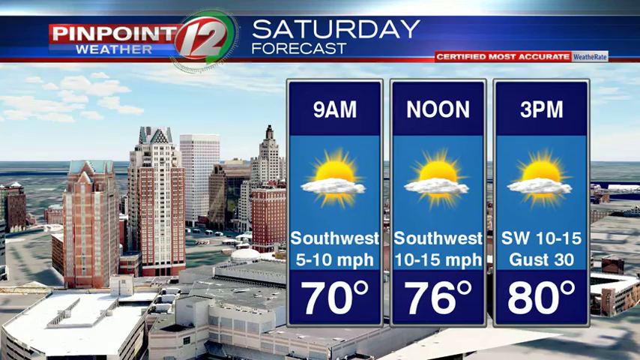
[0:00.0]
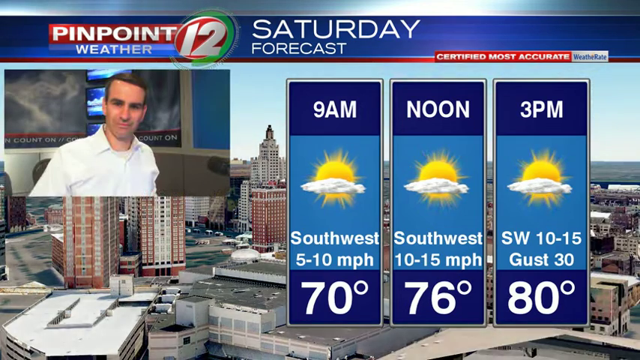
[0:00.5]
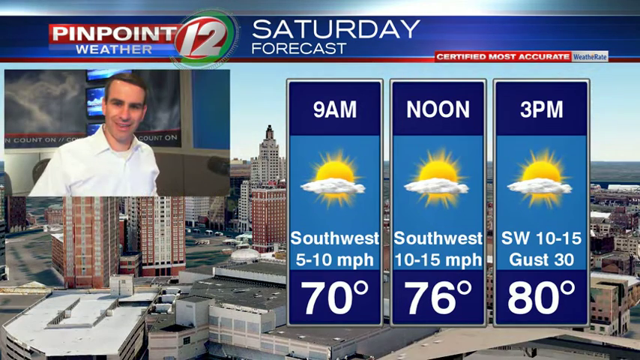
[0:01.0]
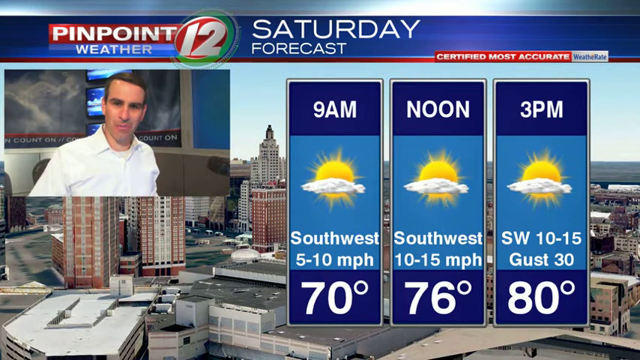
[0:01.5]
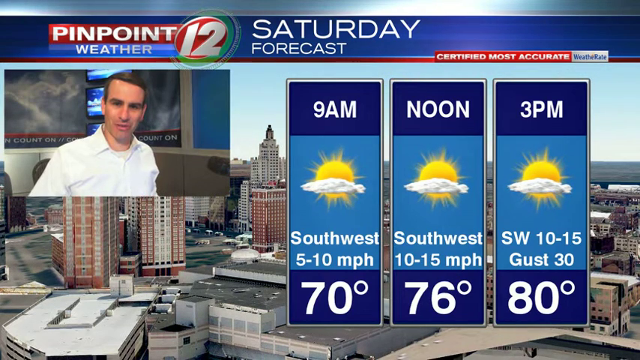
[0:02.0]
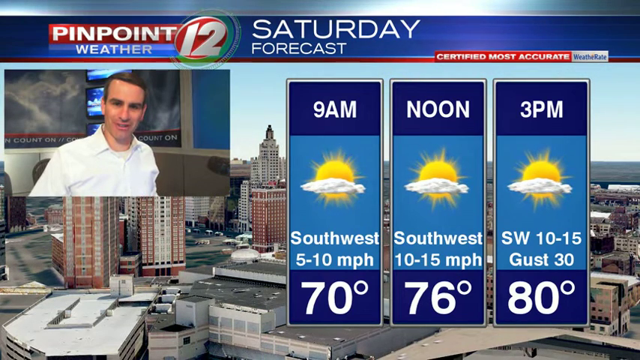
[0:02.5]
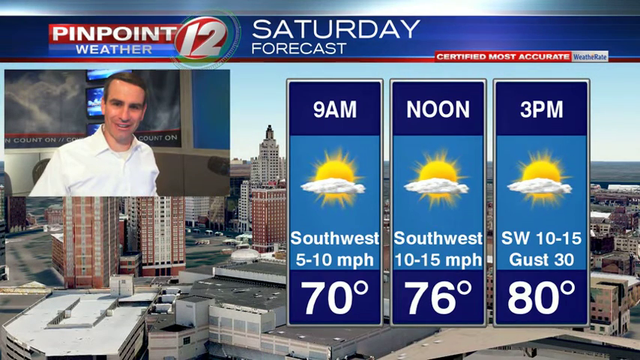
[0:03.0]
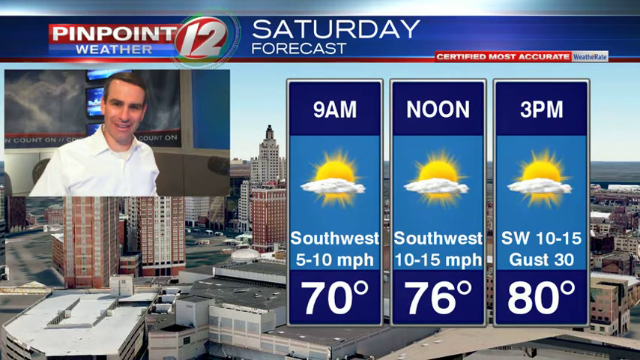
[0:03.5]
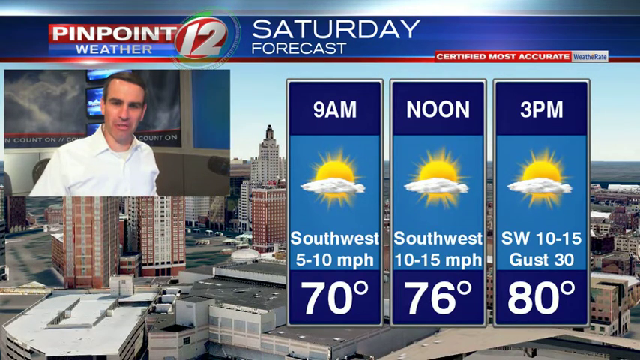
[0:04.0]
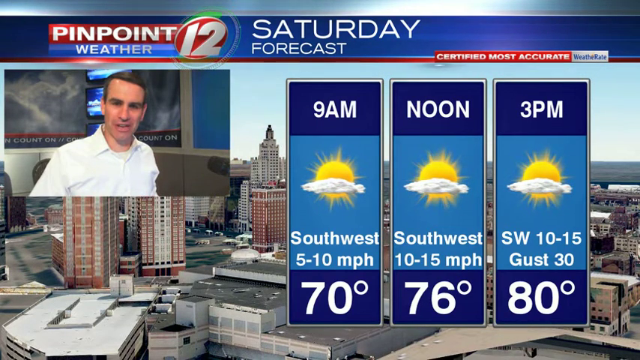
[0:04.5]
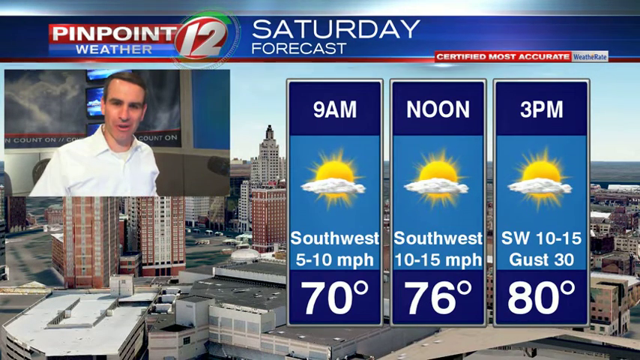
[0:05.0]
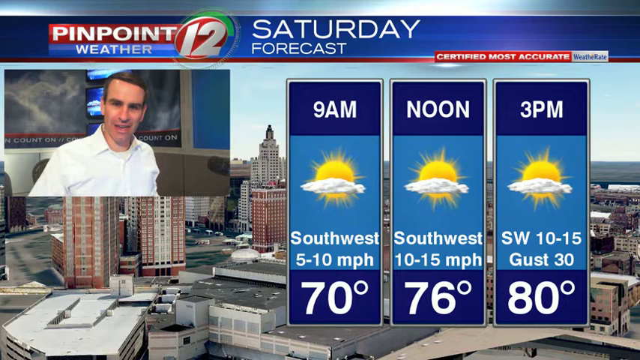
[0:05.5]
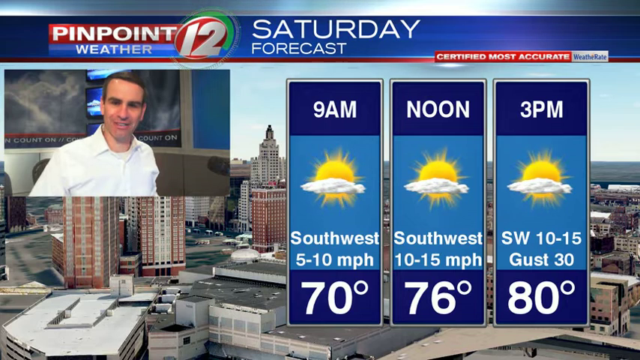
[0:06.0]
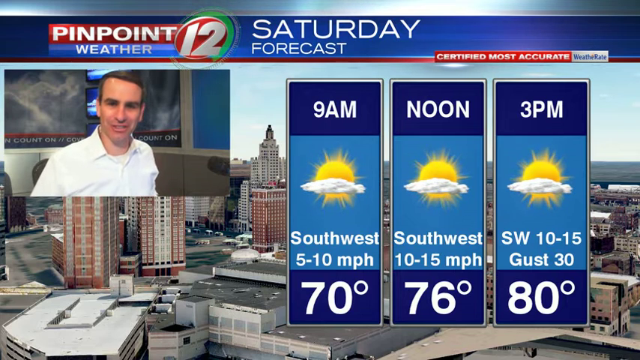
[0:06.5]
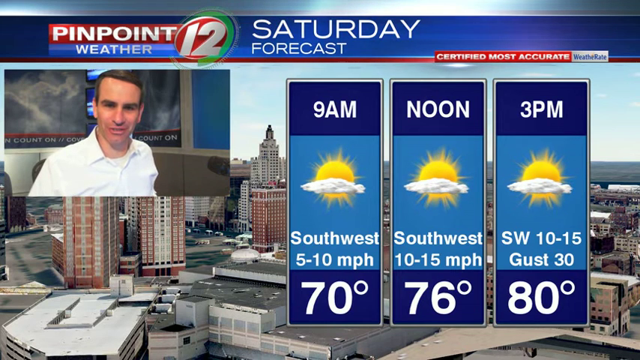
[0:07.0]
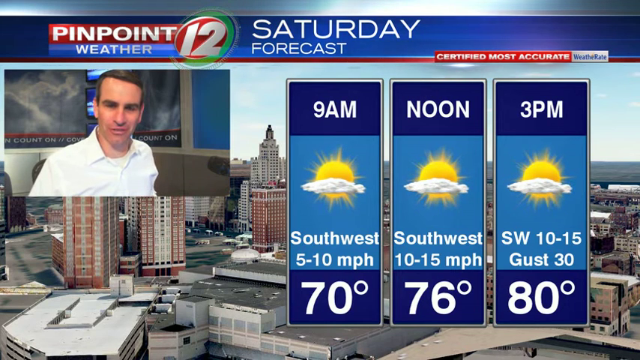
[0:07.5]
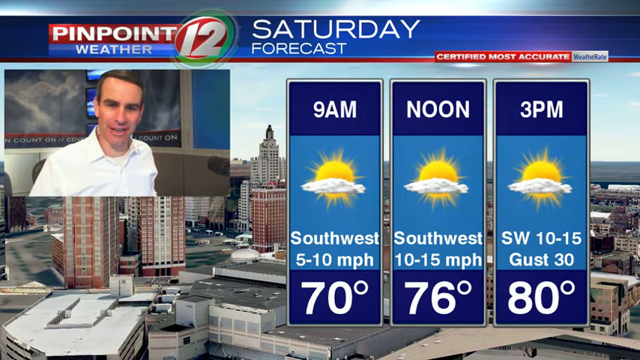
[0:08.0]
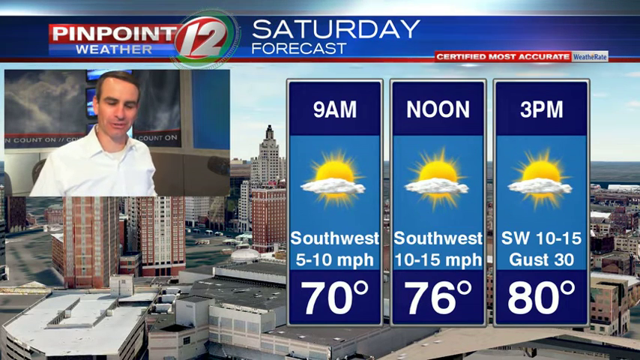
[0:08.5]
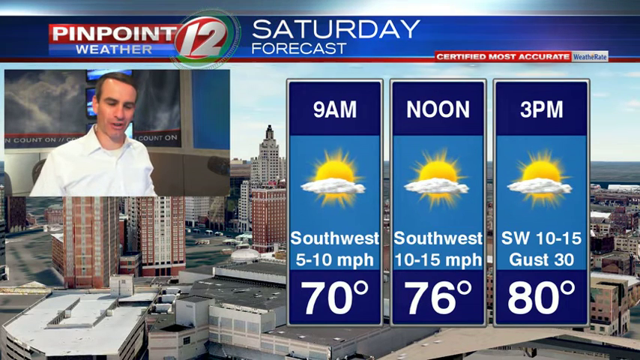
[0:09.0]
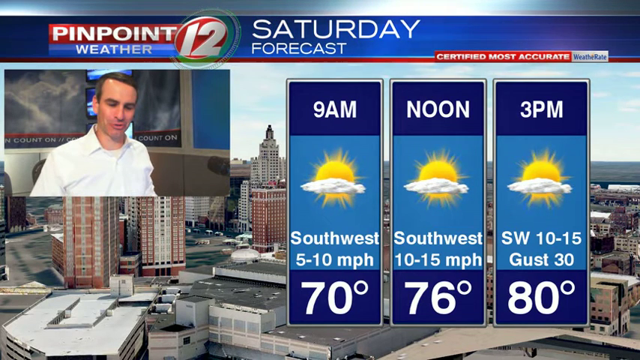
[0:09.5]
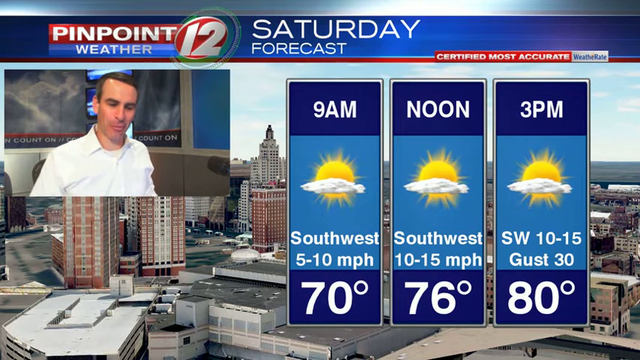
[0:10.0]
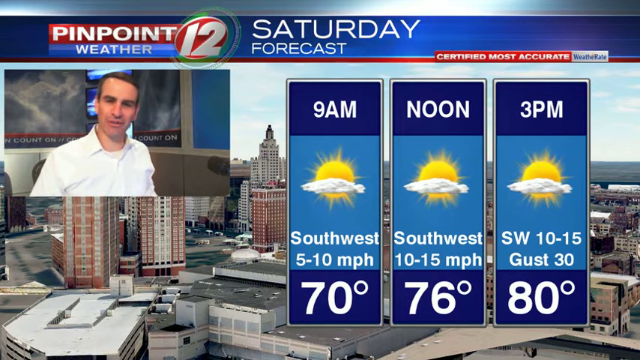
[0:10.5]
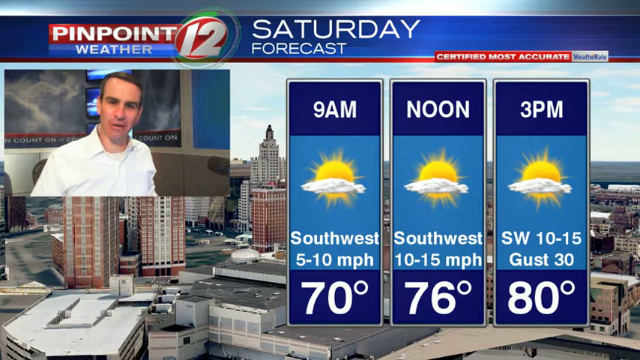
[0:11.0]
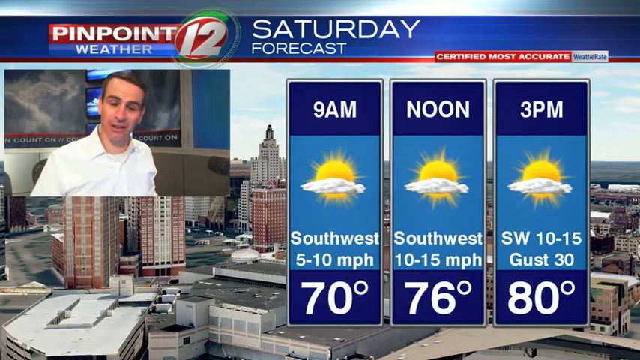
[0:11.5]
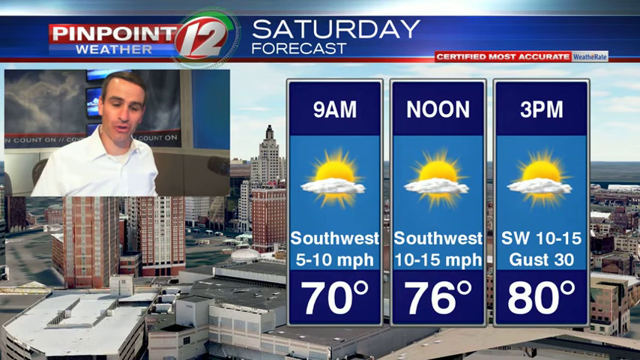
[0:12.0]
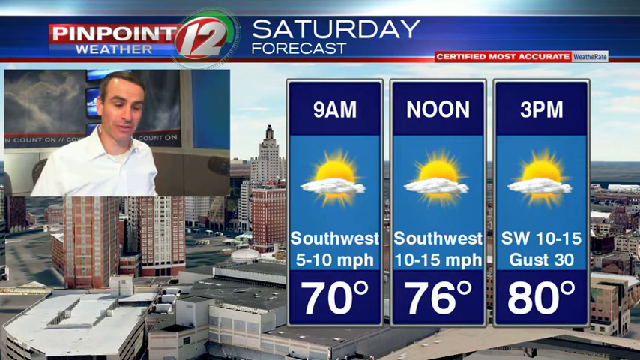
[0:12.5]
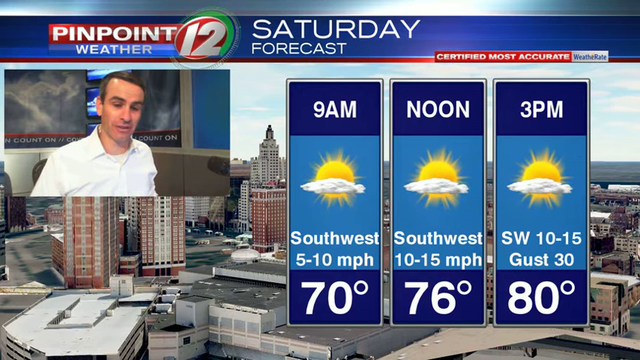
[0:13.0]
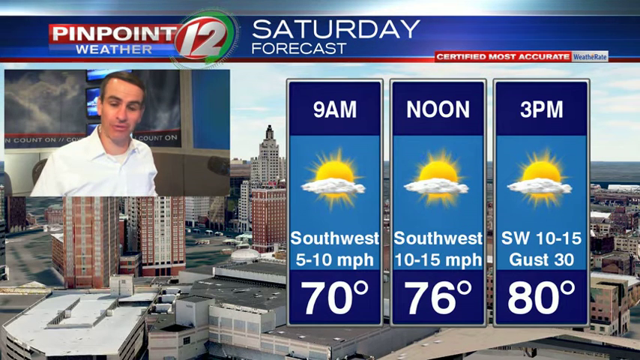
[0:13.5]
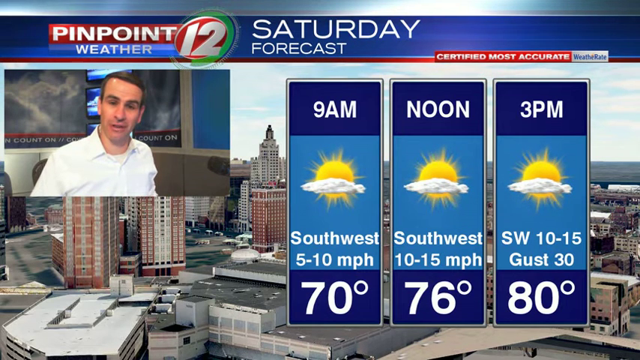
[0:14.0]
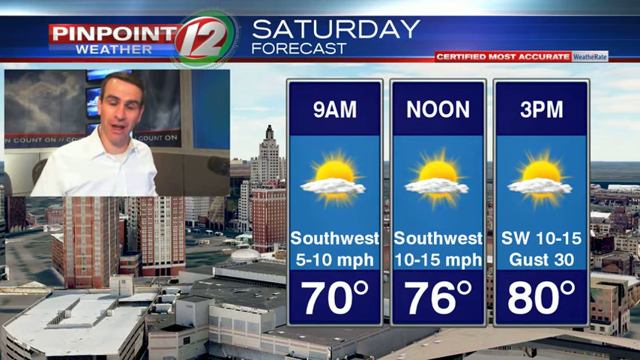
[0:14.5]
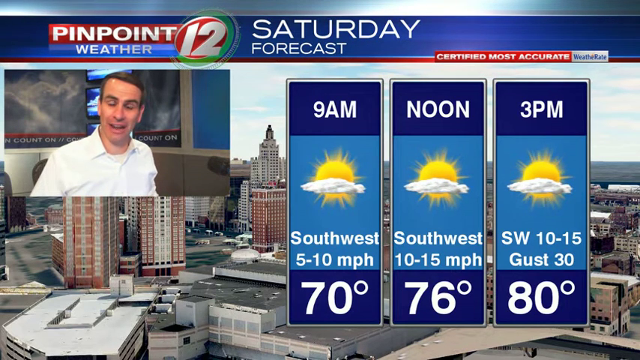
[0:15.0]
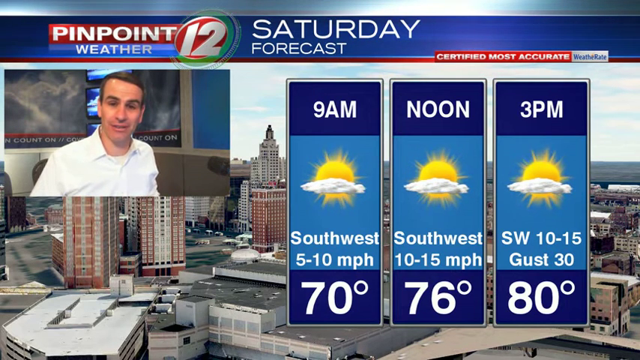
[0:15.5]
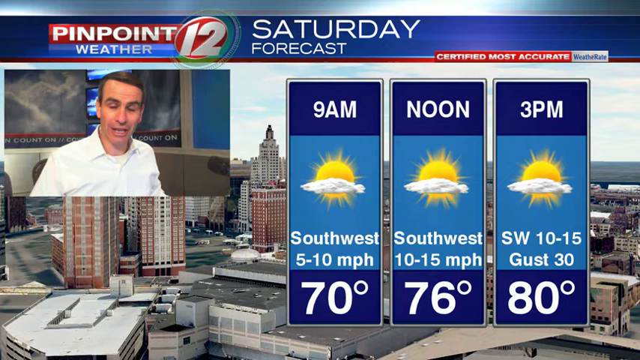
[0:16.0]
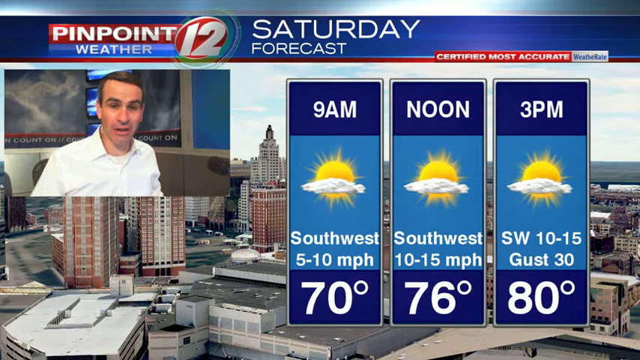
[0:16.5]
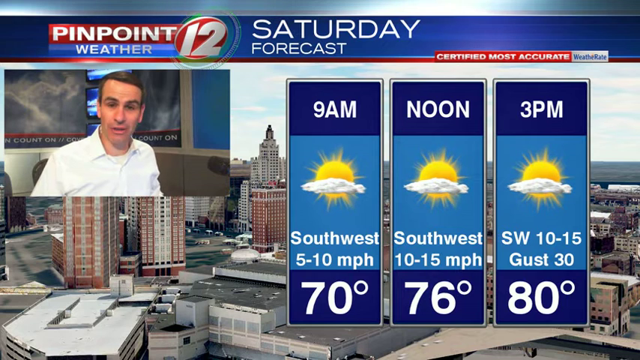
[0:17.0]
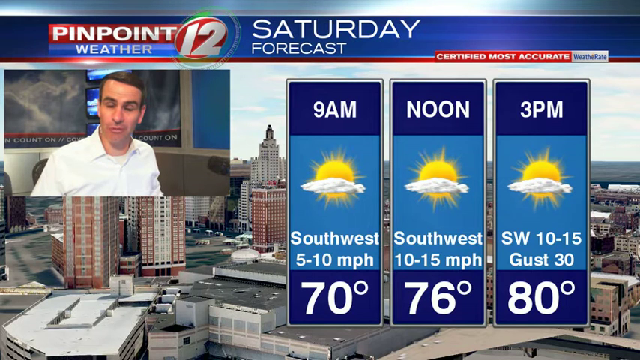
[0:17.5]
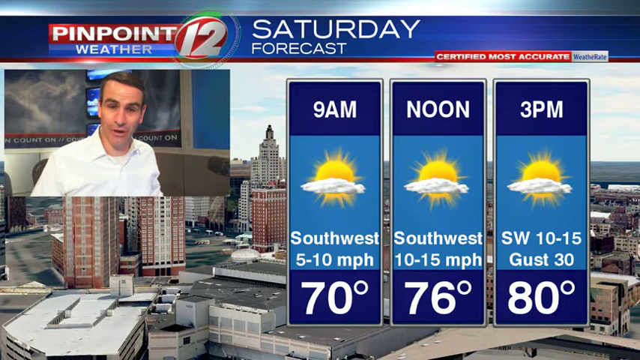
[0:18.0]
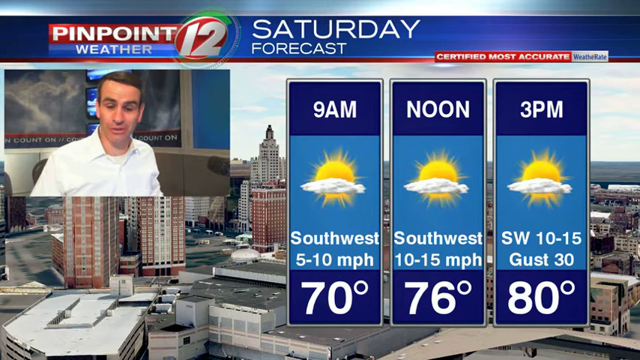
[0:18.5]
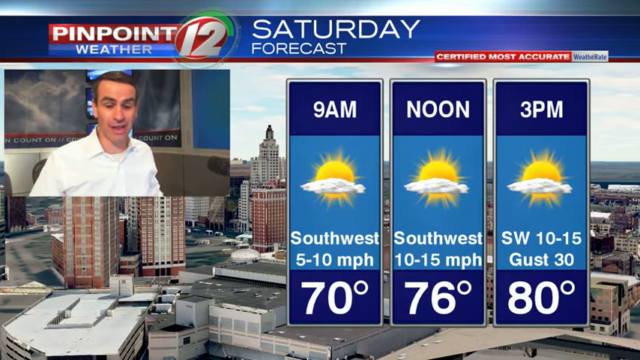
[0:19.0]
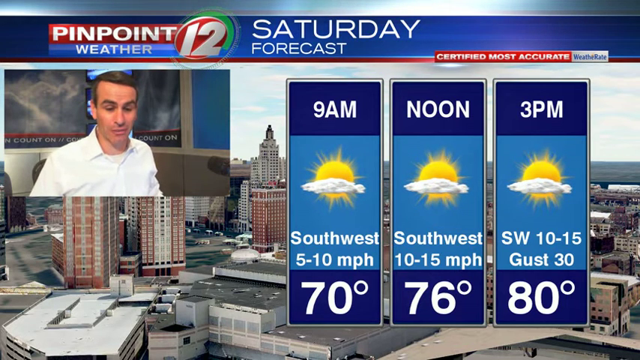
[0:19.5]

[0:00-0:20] A weather report appears, in what seems to be a segment called Pinpoint Weather, showing a Saturday forecast. A banner reads "certified most accurate." A weatherman wearing a white shirt is in the top left of the screen. The forecast shows how the weather changes through the day: at 9am, 70 degrees with a southwest wind of 5-10 mph; at noon, 76 degrees with a southwest wind of 10-15 mph; and at 3pm, 80 degrees with a southwest wind of 10-15 mph and gusts of 30 mph. In the background is a 3D model of a city.